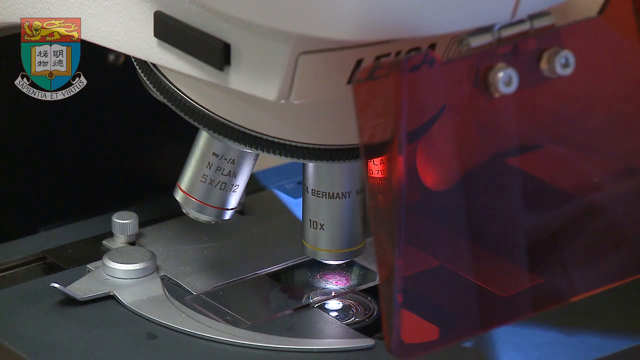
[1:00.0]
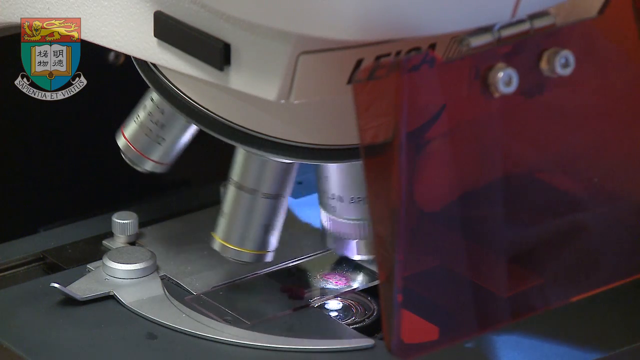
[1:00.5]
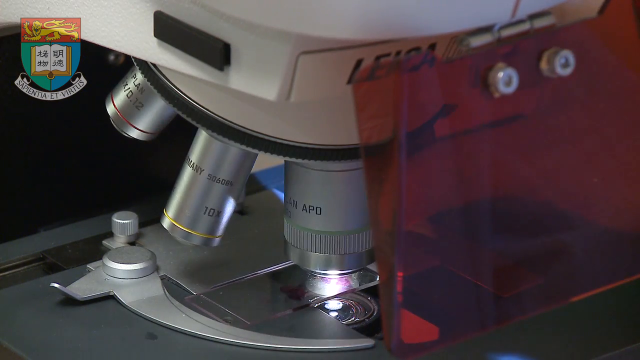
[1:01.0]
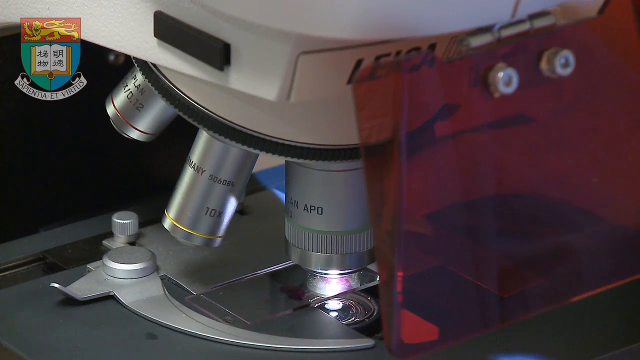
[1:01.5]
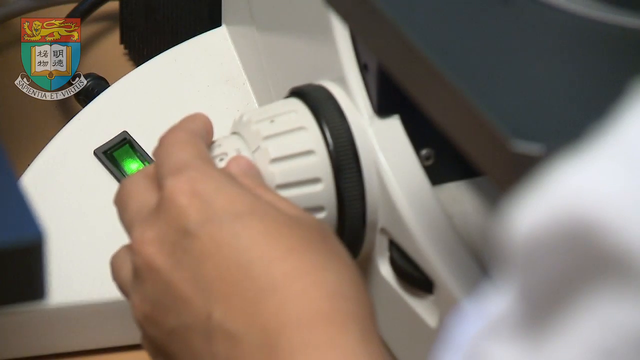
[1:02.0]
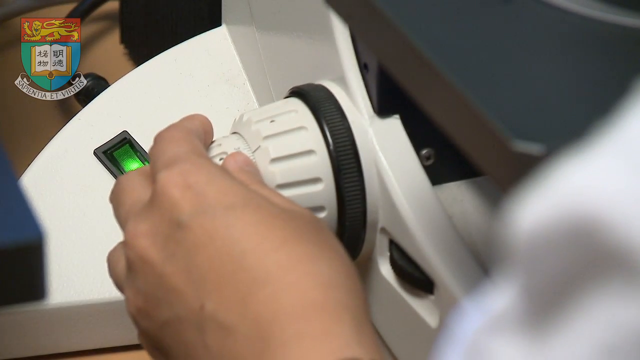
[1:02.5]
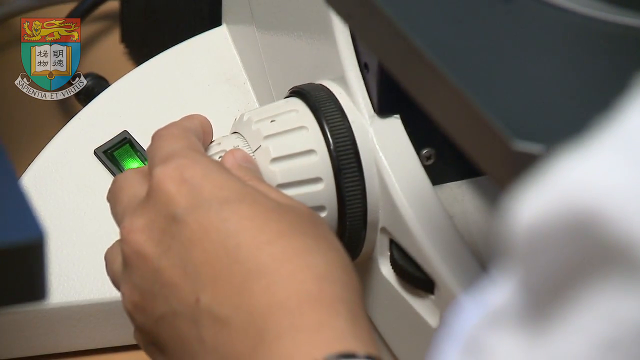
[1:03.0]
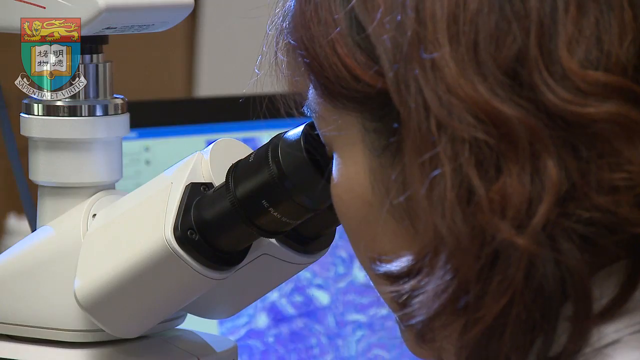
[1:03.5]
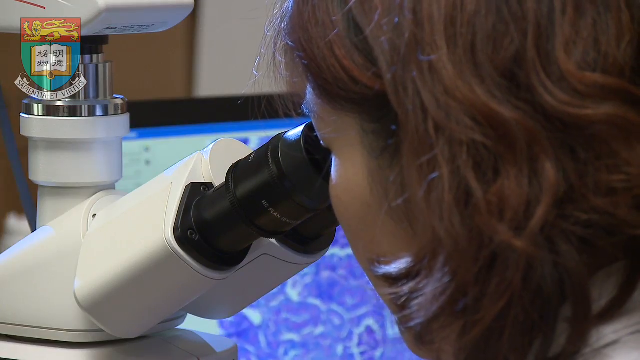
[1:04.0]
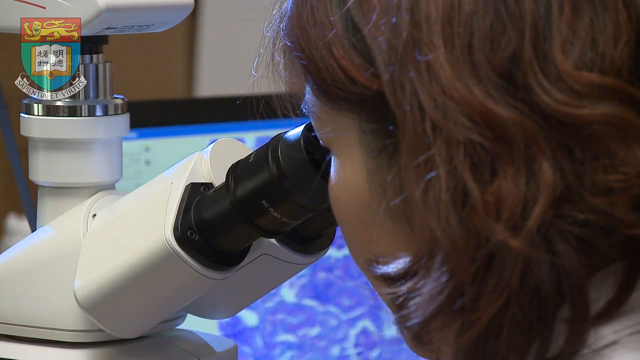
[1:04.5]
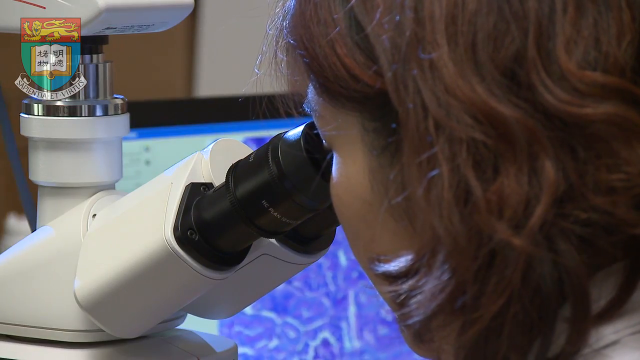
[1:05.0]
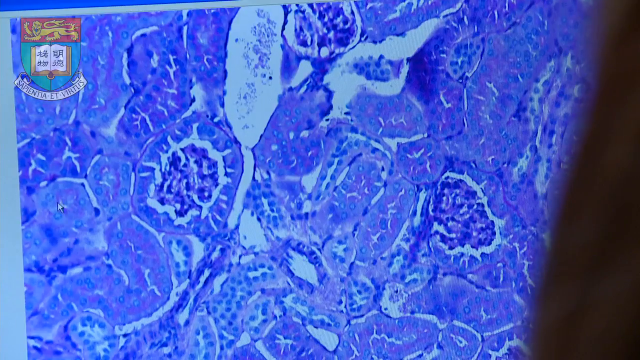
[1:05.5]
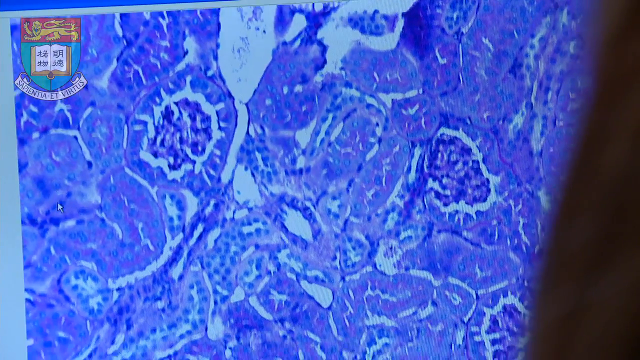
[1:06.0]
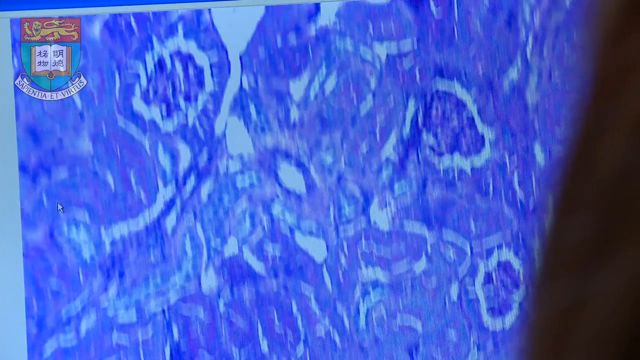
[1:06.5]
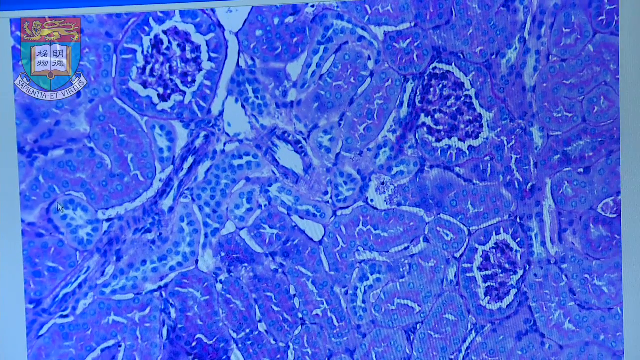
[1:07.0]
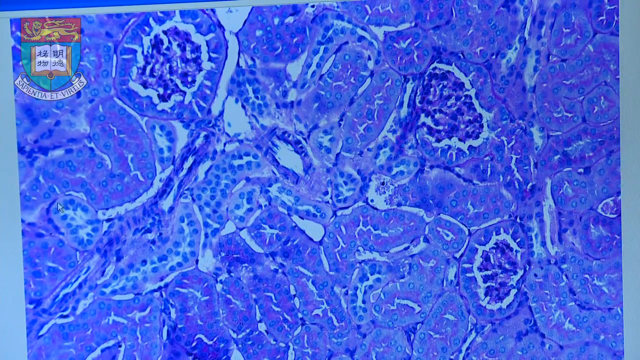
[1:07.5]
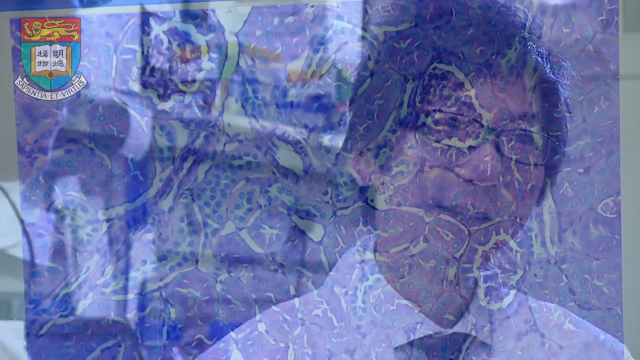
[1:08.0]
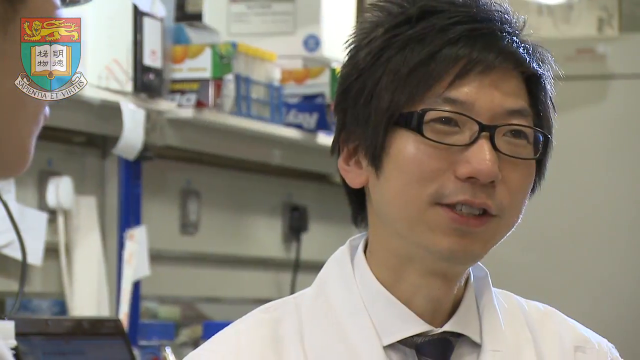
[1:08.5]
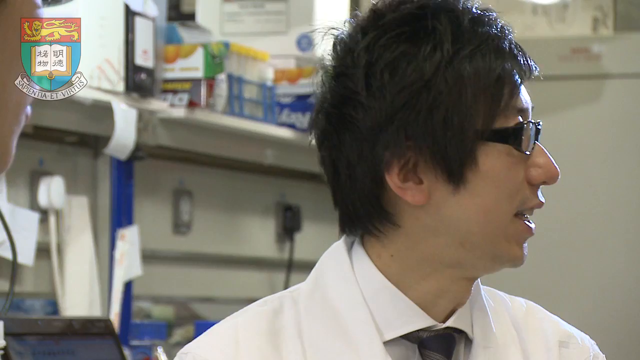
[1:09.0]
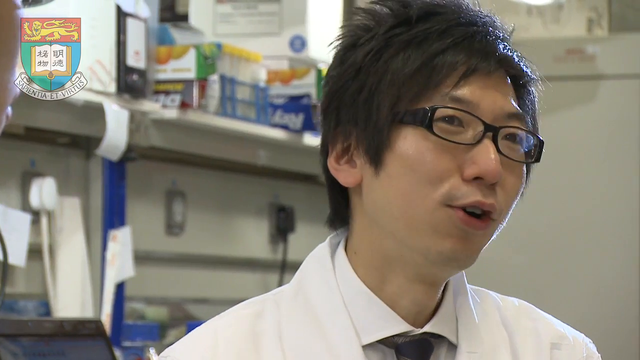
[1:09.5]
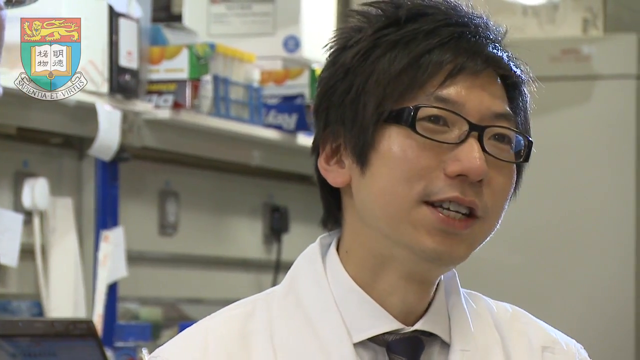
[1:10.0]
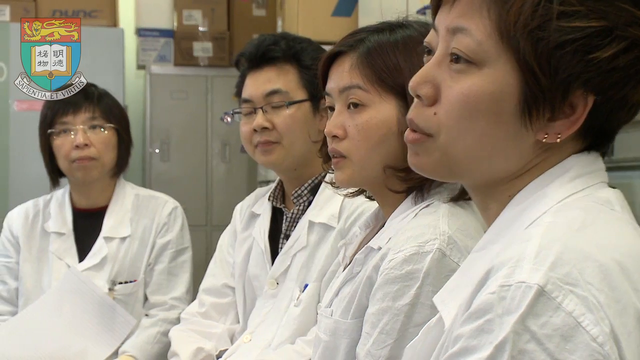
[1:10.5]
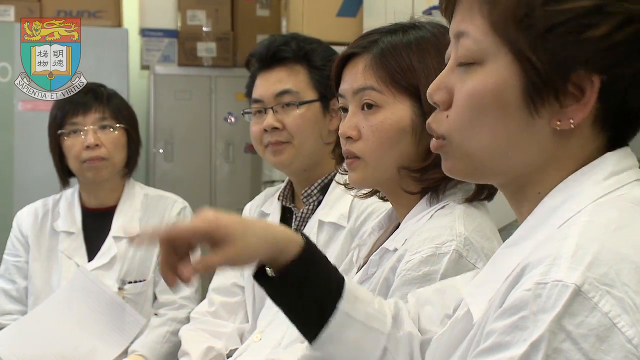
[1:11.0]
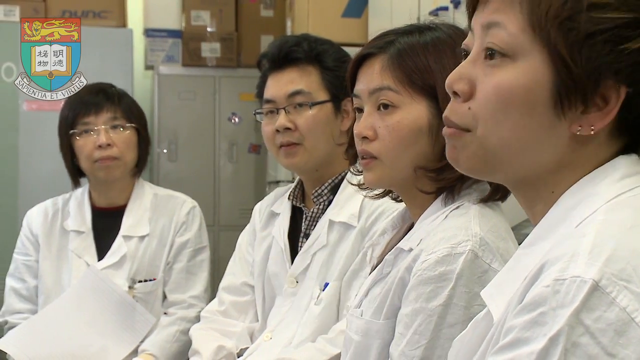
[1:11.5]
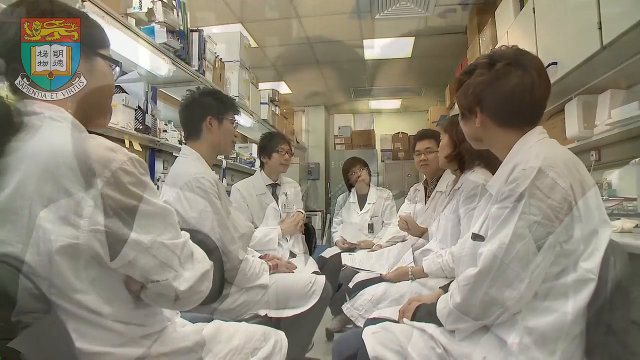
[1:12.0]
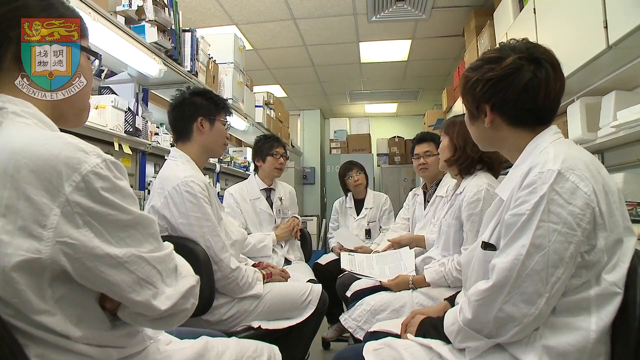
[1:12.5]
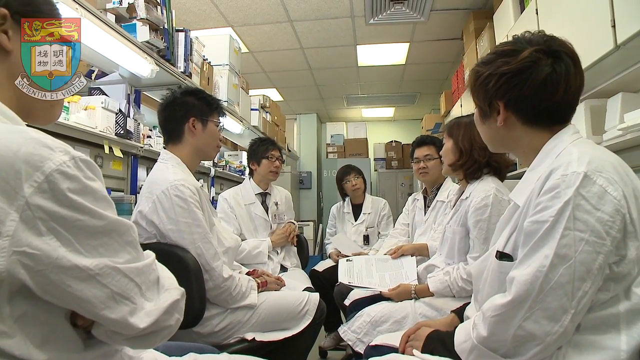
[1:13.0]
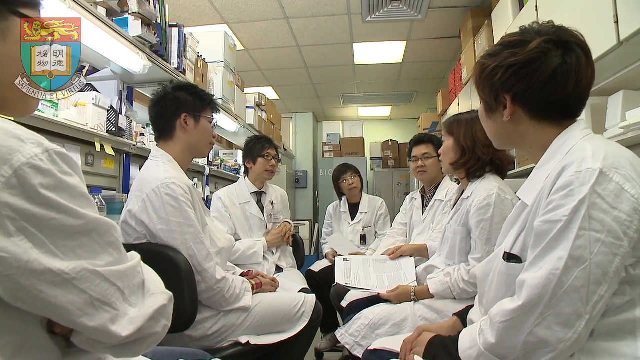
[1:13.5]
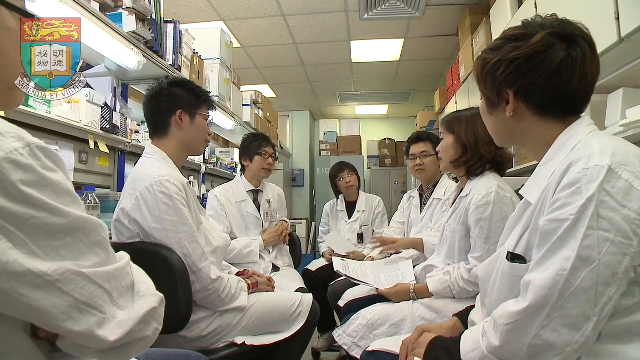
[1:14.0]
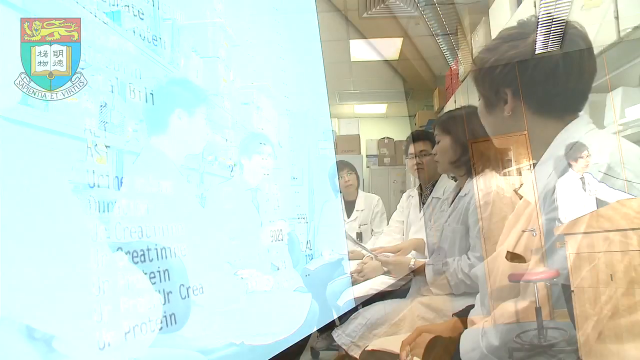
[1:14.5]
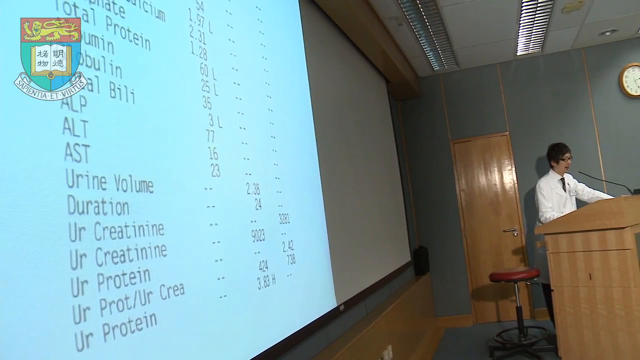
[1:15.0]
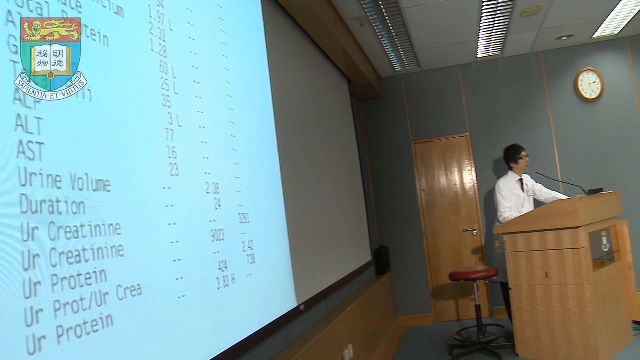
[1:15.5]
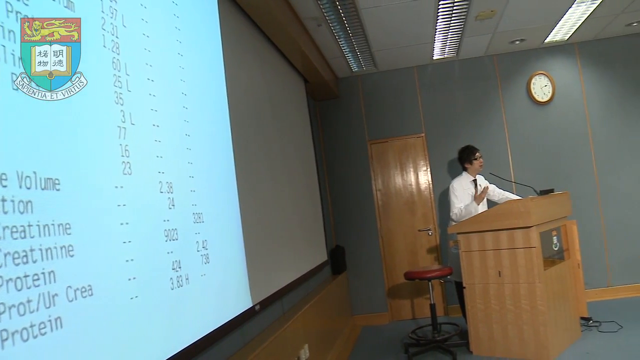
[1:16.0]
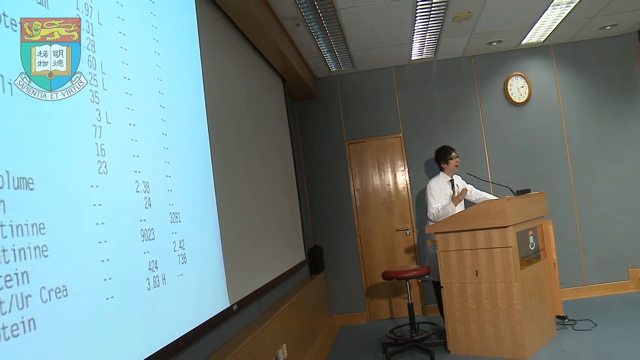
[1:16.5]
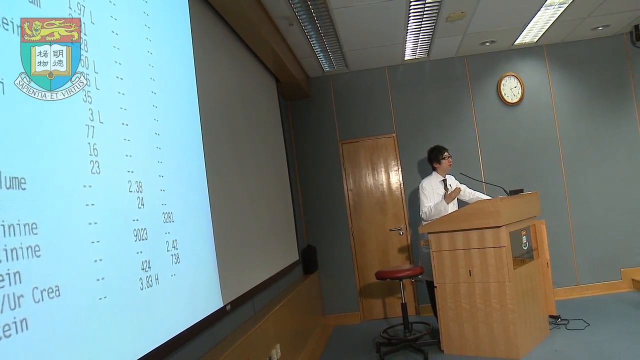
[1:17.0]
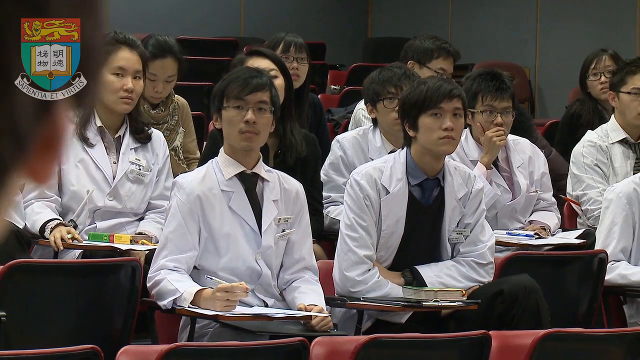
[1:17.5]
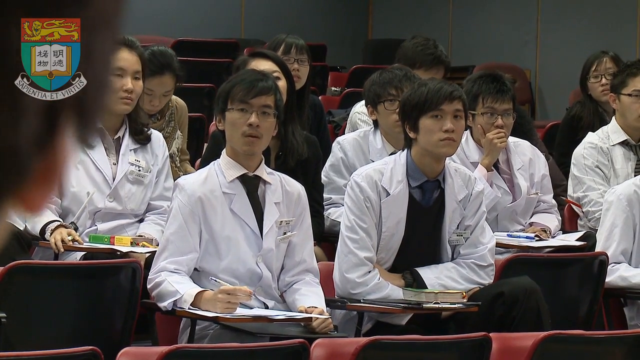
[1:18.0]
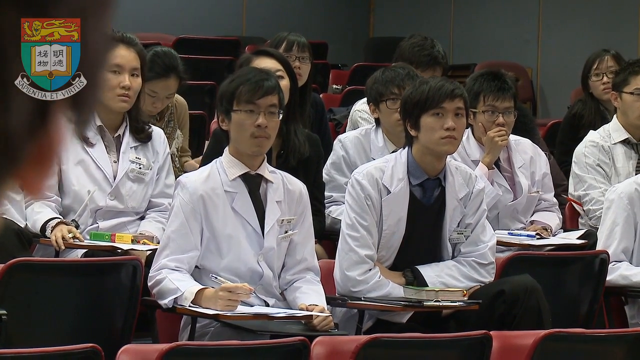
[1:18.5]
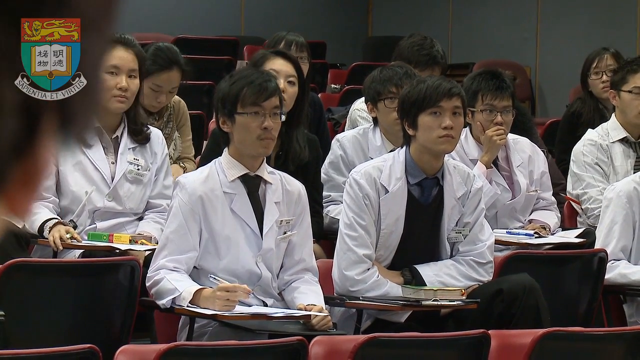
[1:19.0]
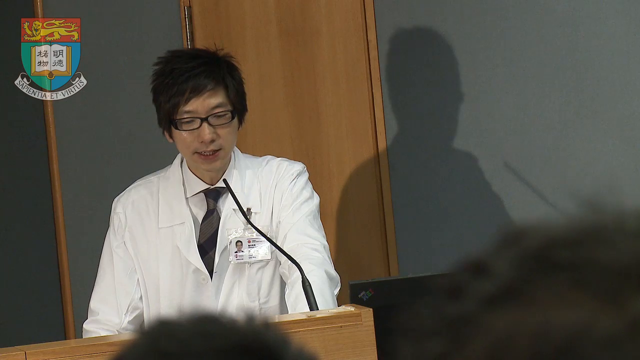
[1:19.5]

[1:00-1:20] A close-up shows a microscope with one of its lenses pointing down at a sample. The lenses are labeled in yellow and red, and in front of the microscope is a piece of red plastic. The microscope is then spun to bring a green lens pointing down. The shot pulls back to another section of the microscope, where someone manipulates a dial to change lenses. The video cuts to a young woman's face; she has shortly cropped brown hair ending at about her chin and is looking into the lens of the microscope. Next comes a computerized display, likely of what the microscope is focused on. Dr. Tang is then shown speaking to a group of people all wearing white lab coats, who continue their discussion over paperwork. The video then cuts to Mr. Tang speaking at a podium in front of a display showing different numbers and levels of protein within a patient. As he continues speaking, the camera pans to show a group of students sitting at desks and taking notes.